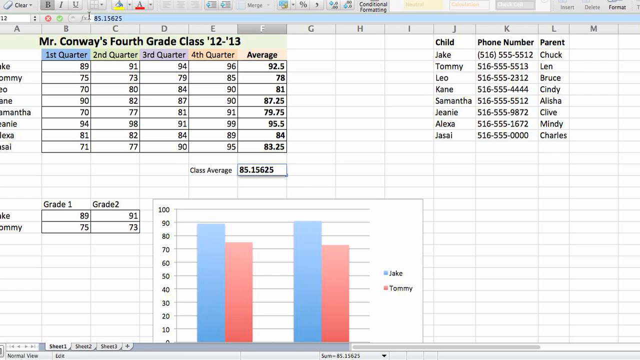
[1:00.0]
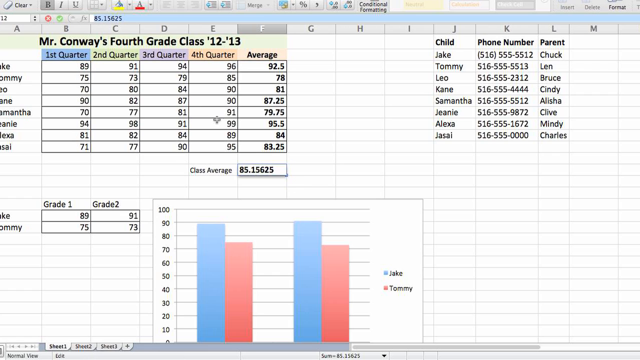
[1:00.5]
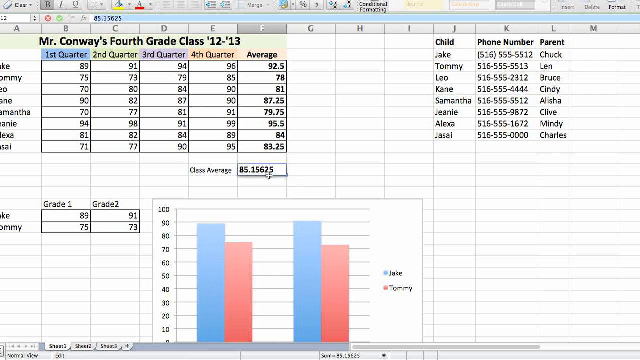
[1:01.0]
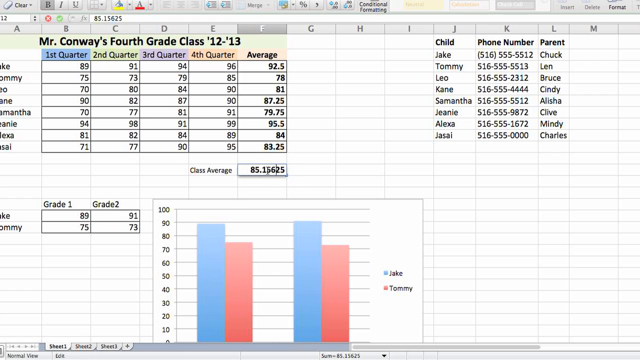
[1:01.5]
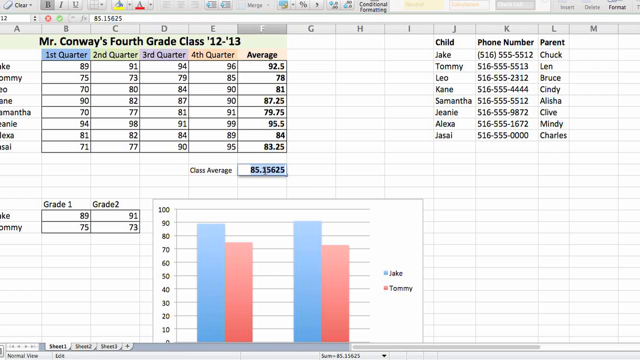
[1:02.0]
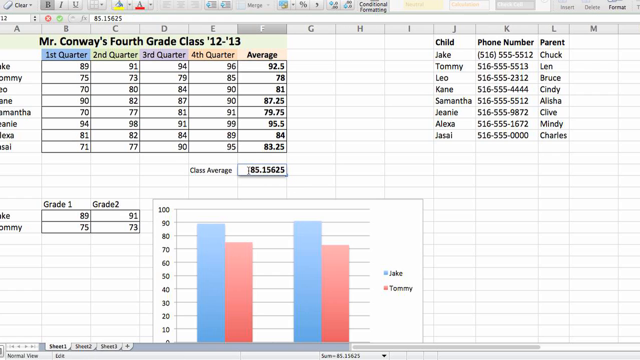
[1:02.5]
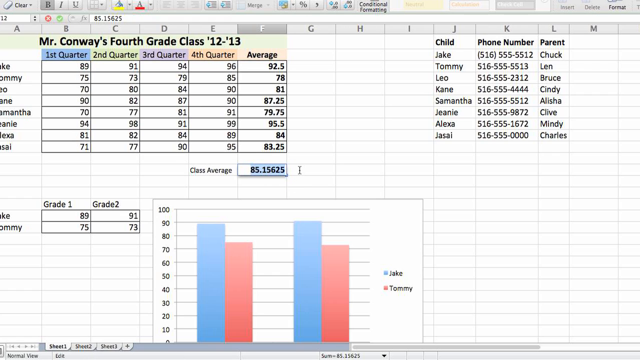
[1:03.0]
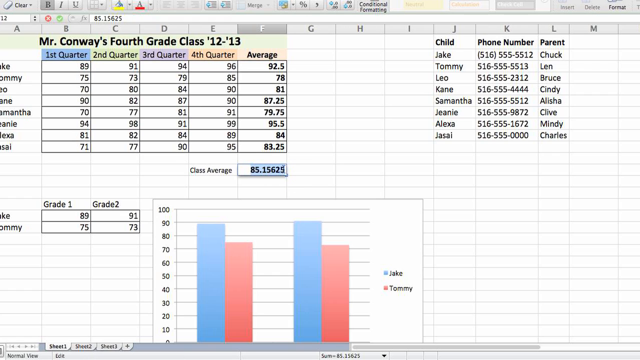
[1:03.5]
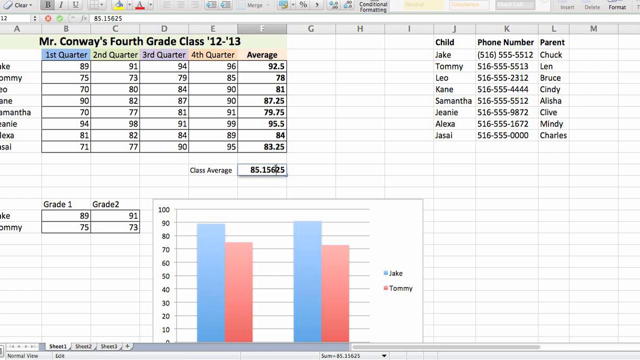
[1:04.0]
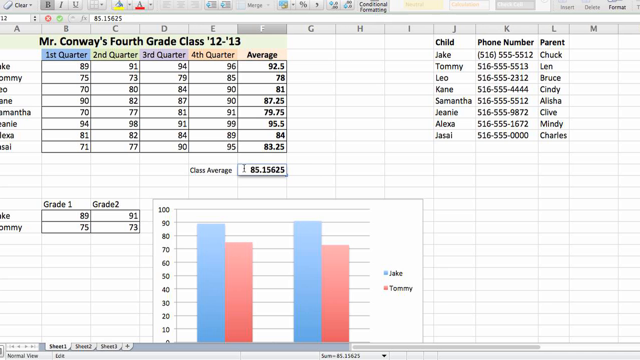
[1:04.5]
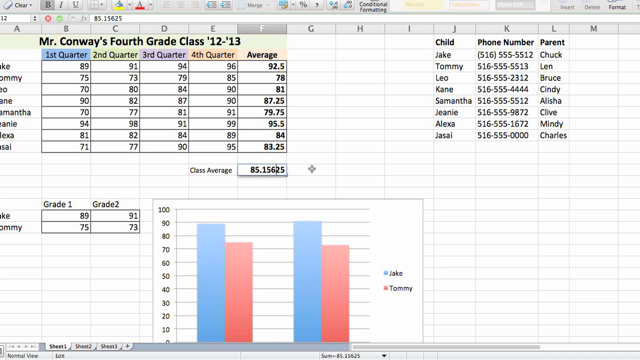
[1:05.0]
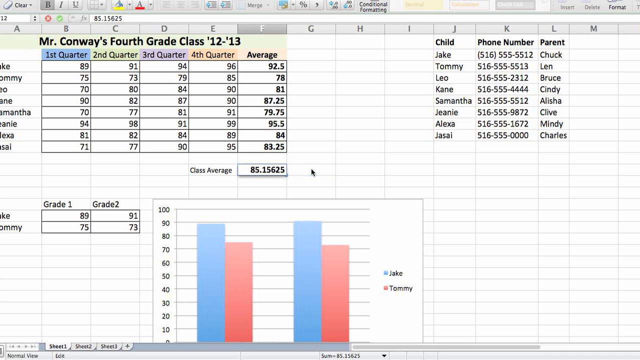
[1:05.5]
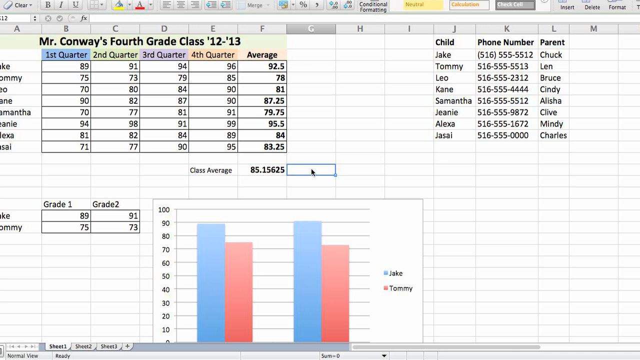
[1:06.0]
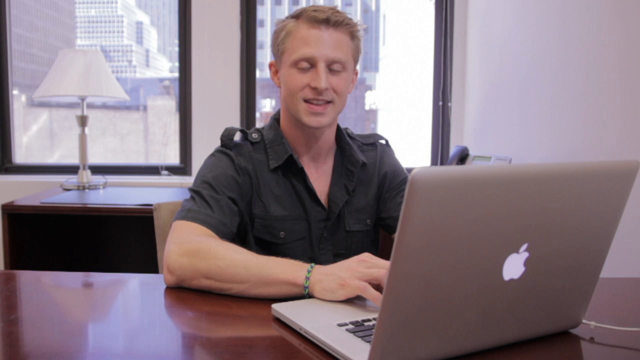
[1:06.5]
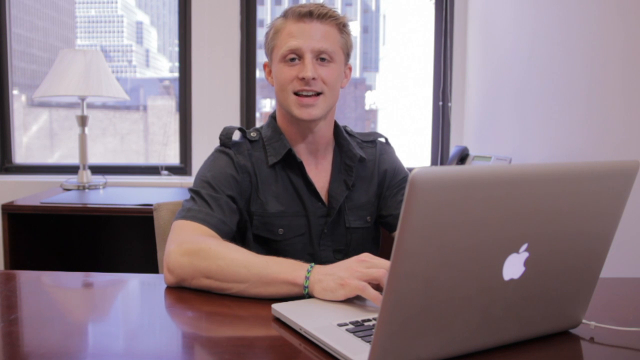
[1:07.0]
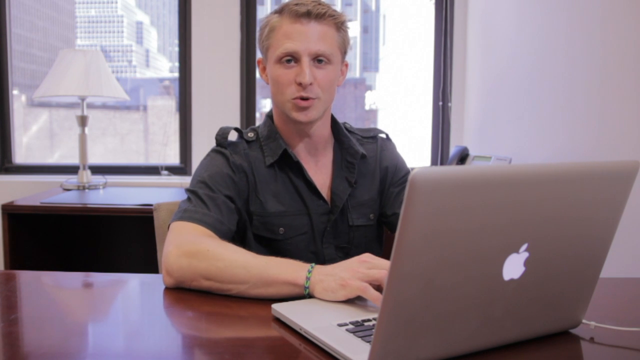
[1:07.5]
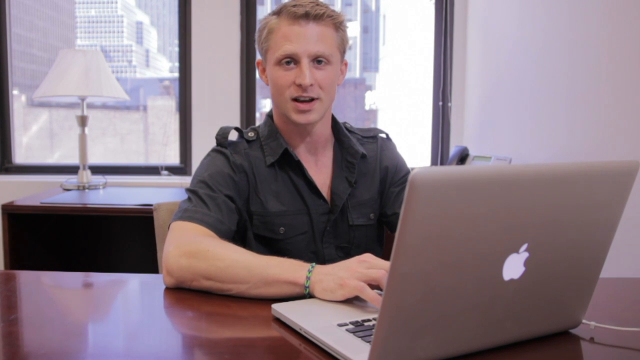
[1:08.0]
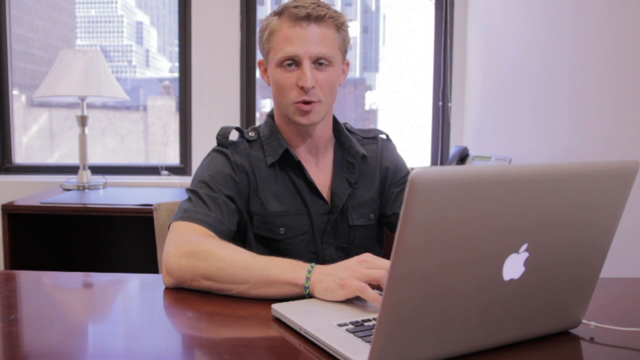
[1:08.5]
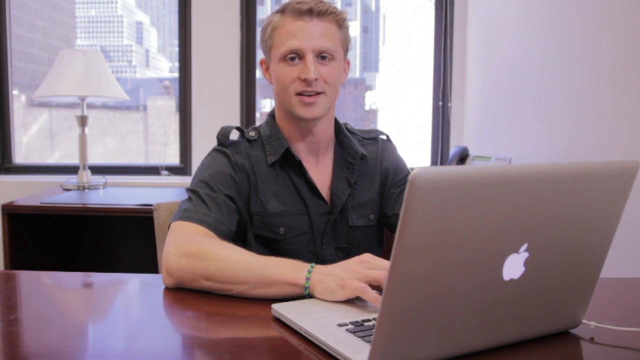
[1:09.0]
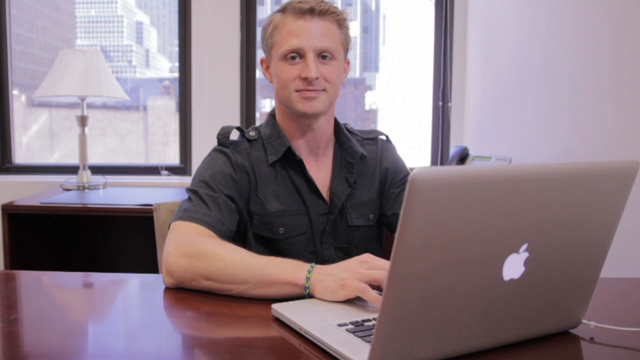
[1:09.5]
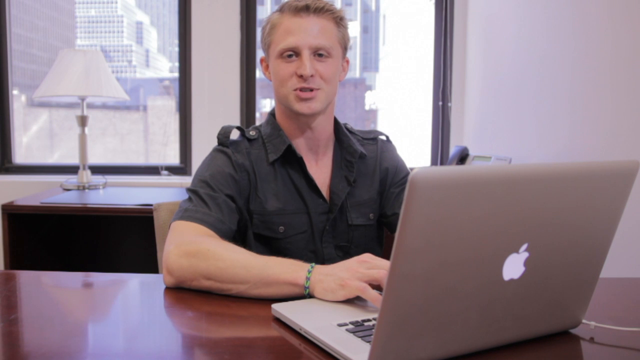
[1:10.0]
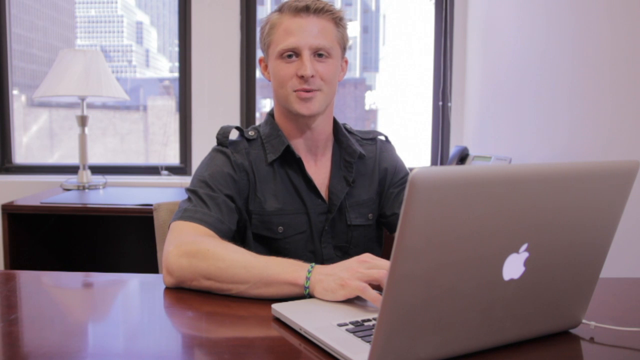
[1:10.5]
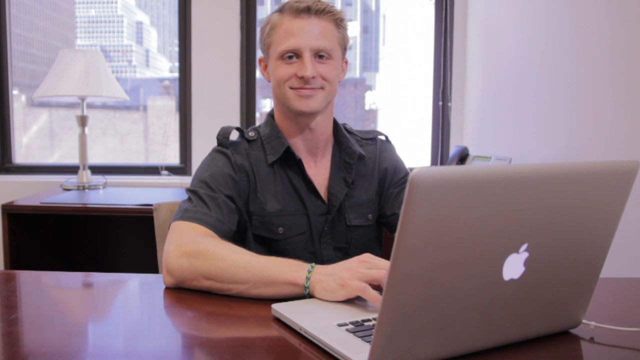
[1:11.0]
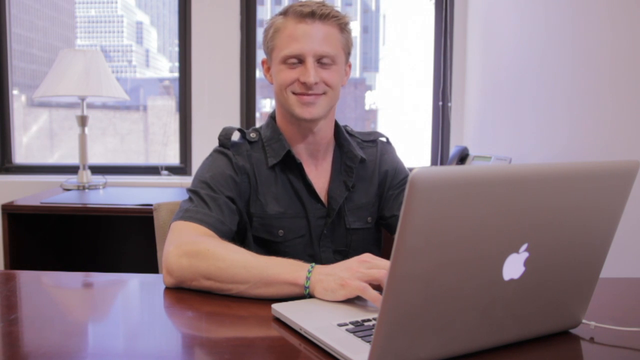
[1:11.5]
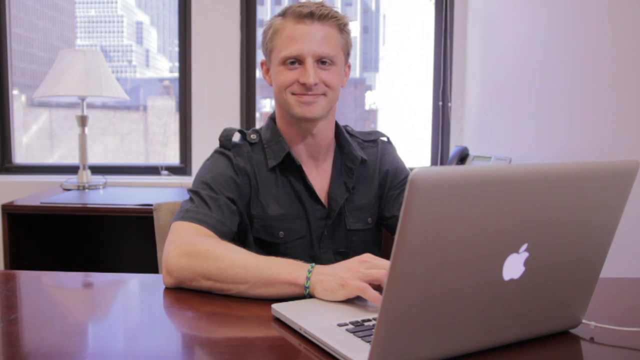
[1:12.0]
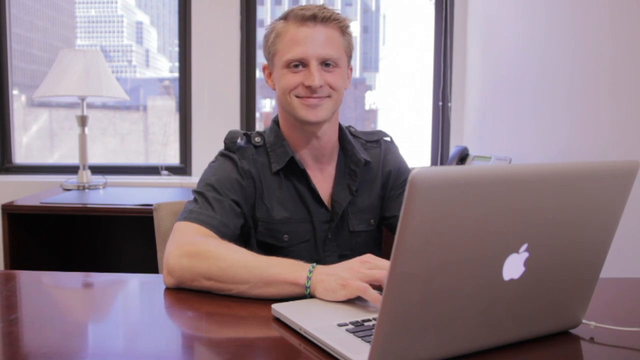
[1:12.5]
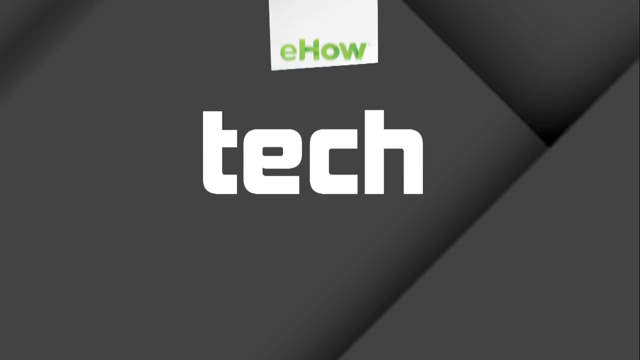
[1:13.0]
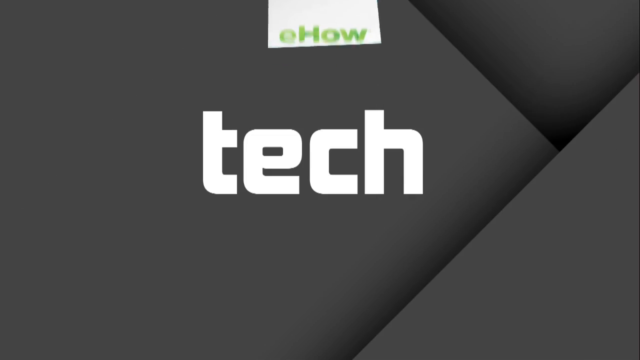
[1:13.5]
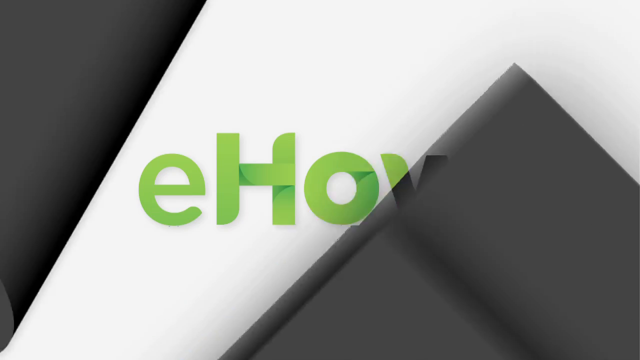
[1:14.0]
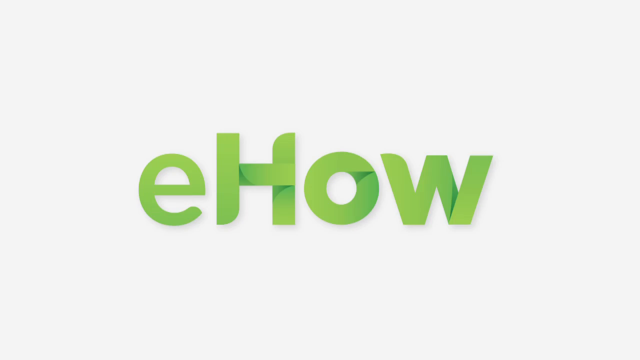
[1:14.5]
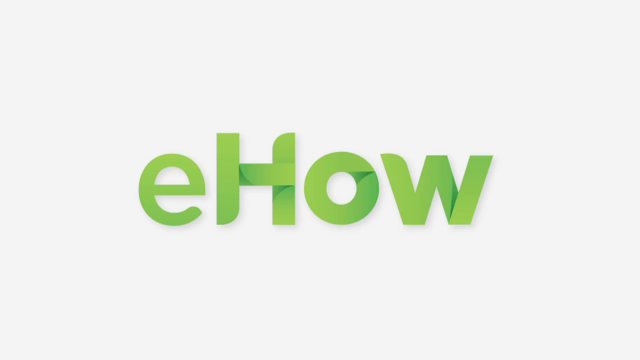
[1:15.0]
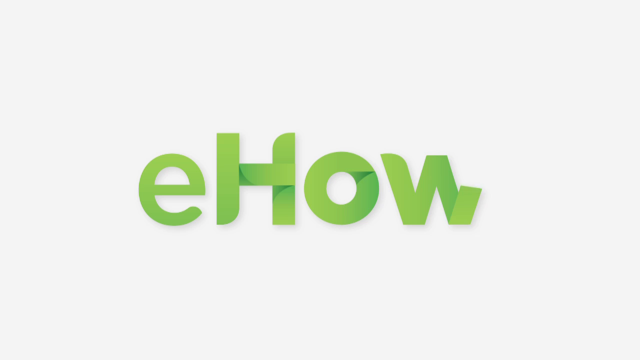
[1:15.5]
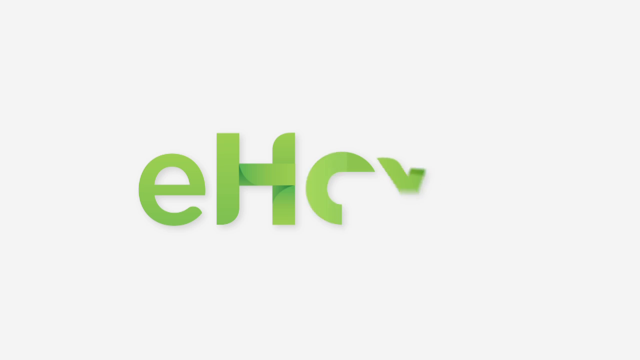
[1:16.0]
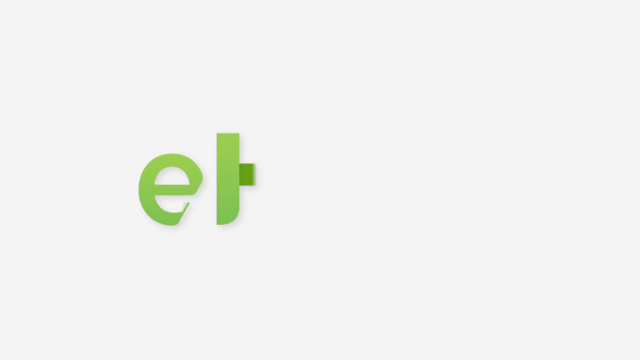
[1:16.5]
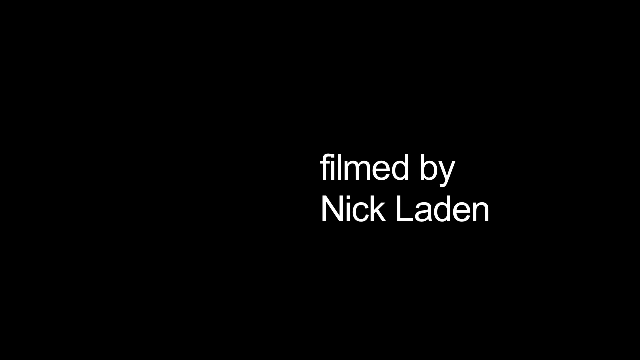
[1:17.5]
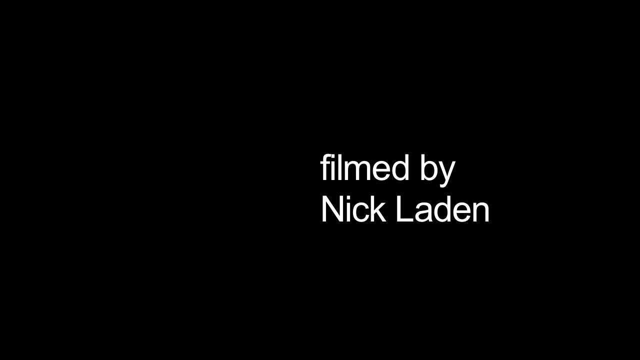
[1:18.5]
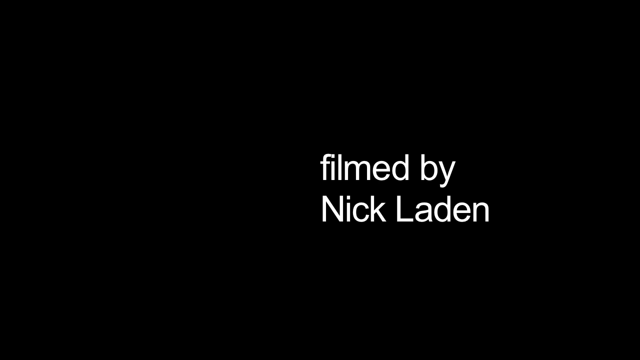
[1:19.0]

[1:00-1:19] A mouse cursor moves on the screen, seemingly as the person teaching shows viewers how to do something and how to copy; a copy option is visible. The cursor then goes to the class average, seemingly to edit the table. The video then returns to the studio and the man with the laptop, who is apparently the one teaching about the chart and numbers. The name "eHow" is visible.